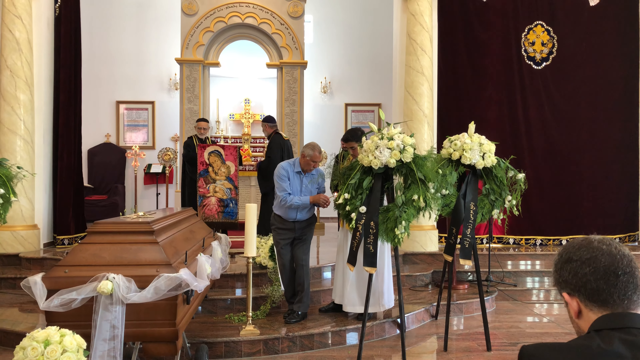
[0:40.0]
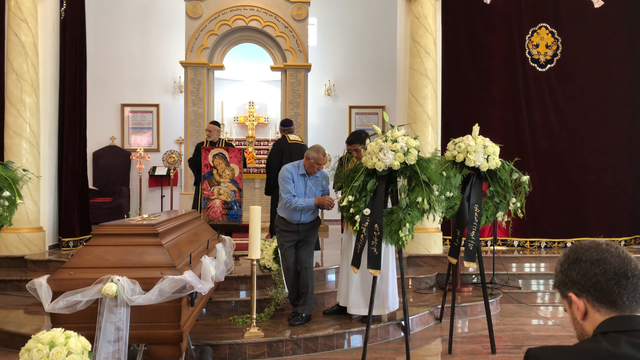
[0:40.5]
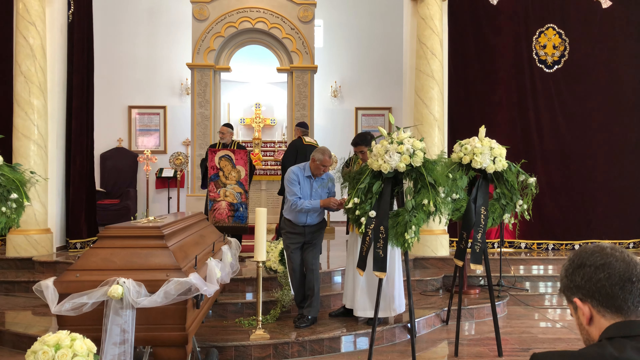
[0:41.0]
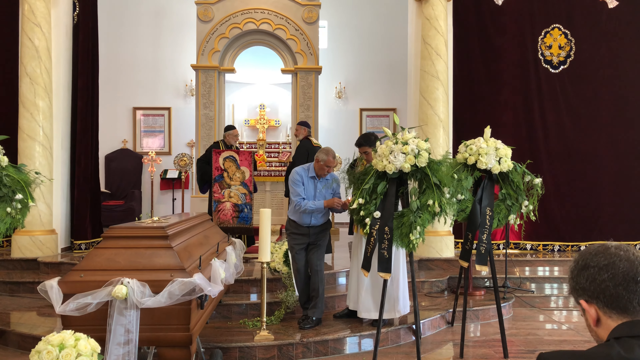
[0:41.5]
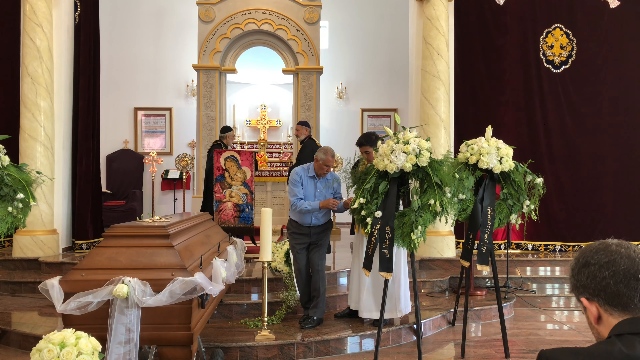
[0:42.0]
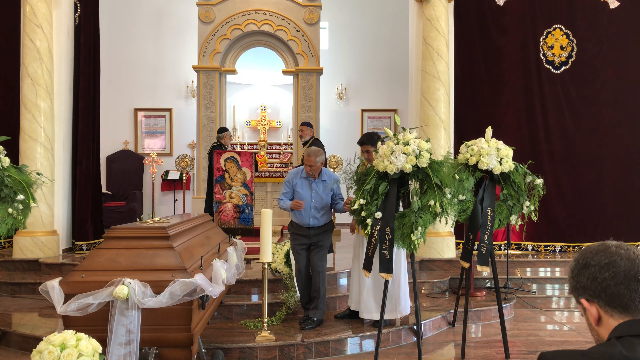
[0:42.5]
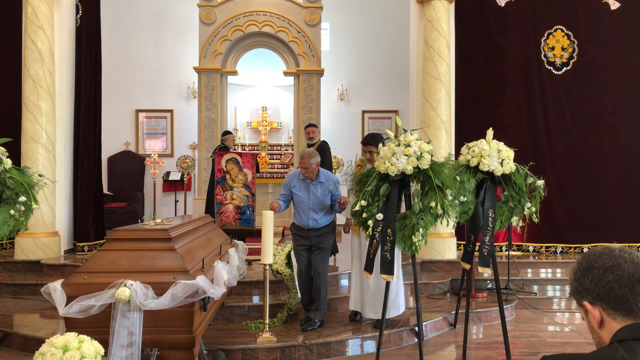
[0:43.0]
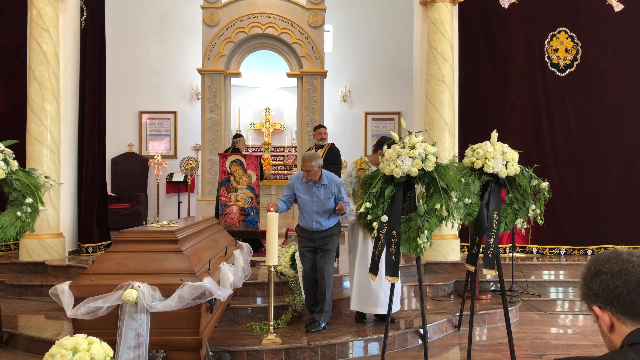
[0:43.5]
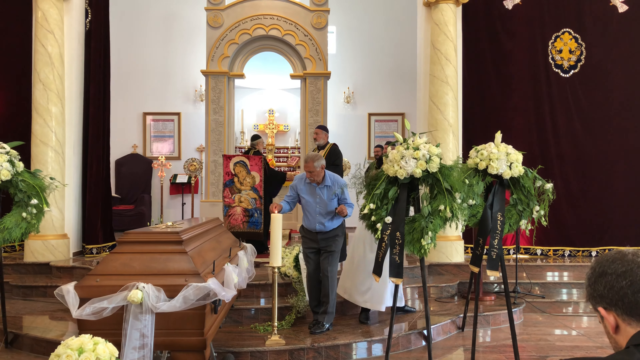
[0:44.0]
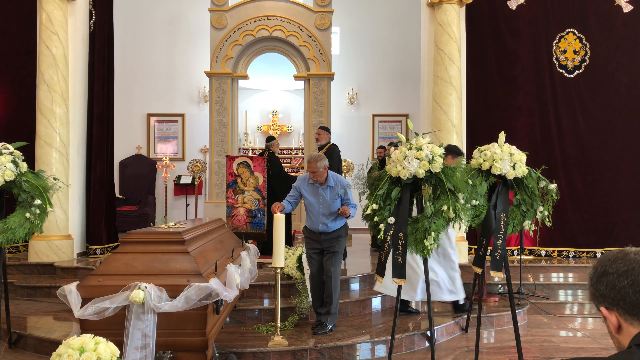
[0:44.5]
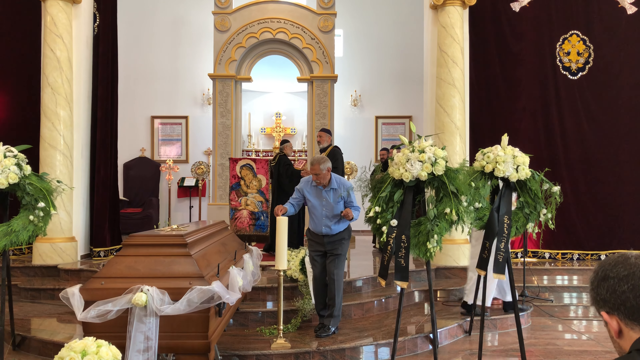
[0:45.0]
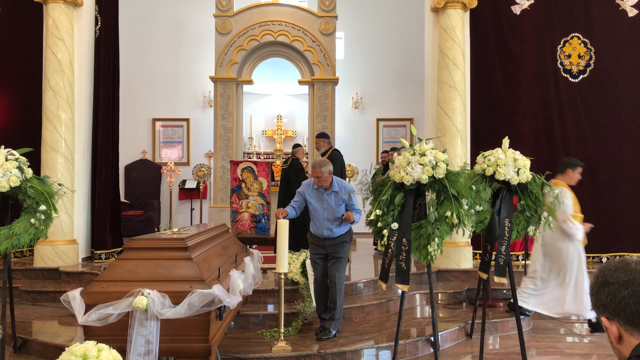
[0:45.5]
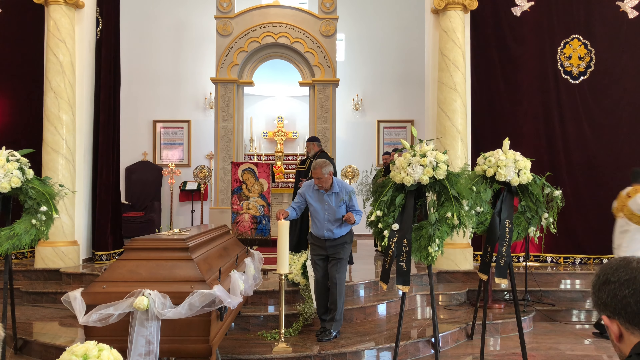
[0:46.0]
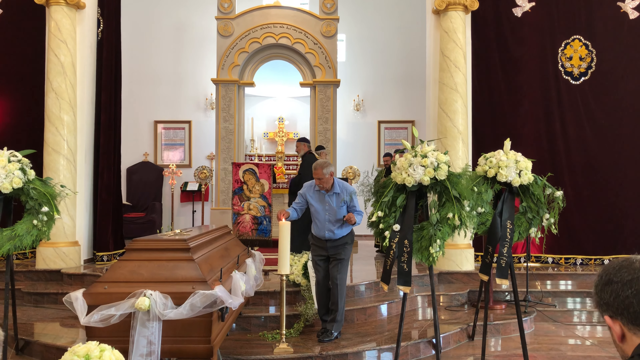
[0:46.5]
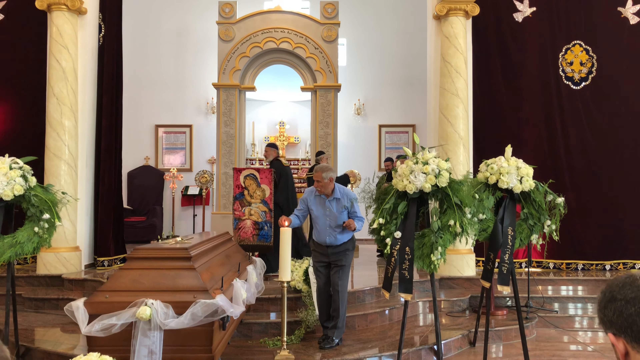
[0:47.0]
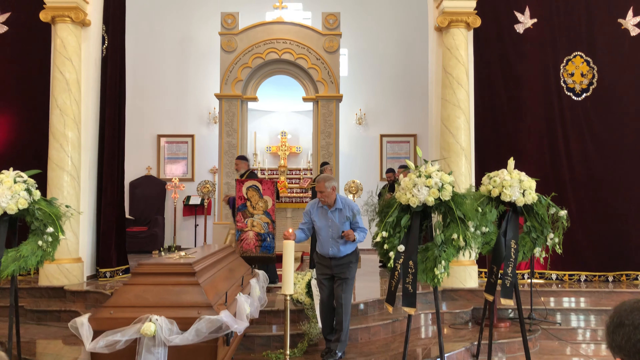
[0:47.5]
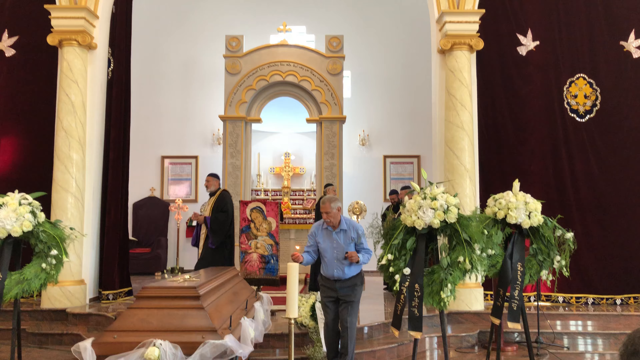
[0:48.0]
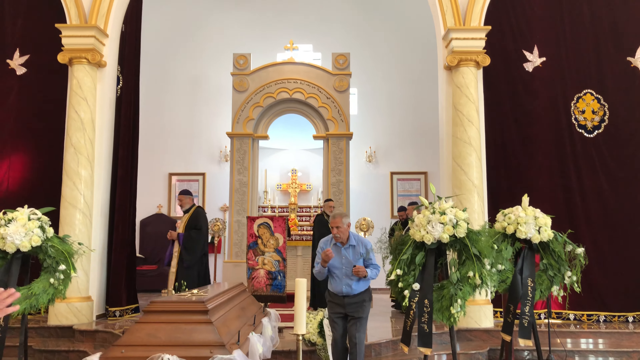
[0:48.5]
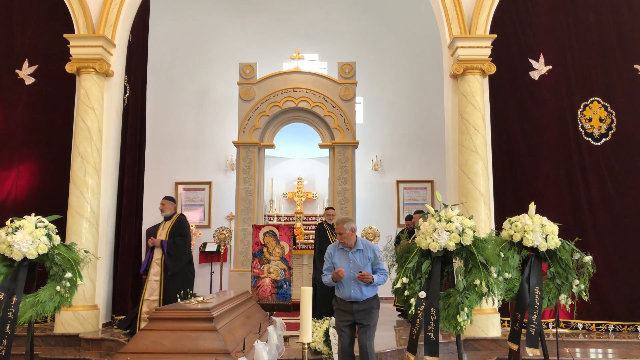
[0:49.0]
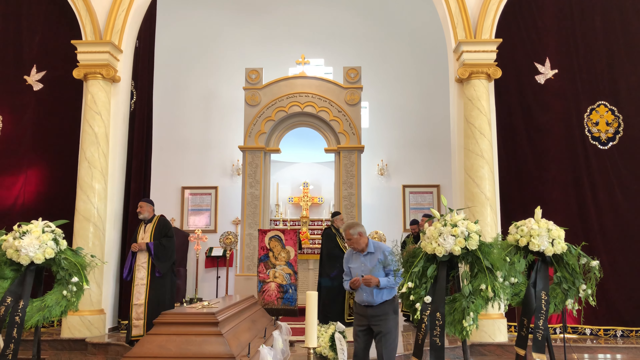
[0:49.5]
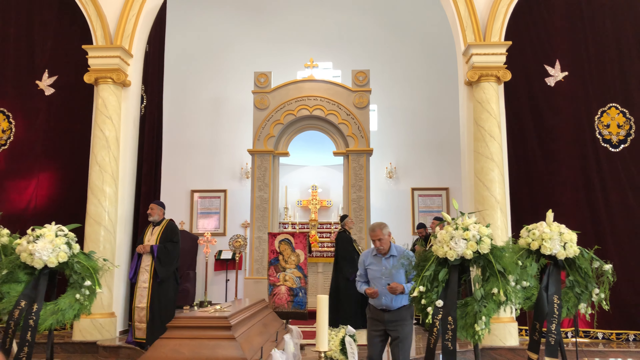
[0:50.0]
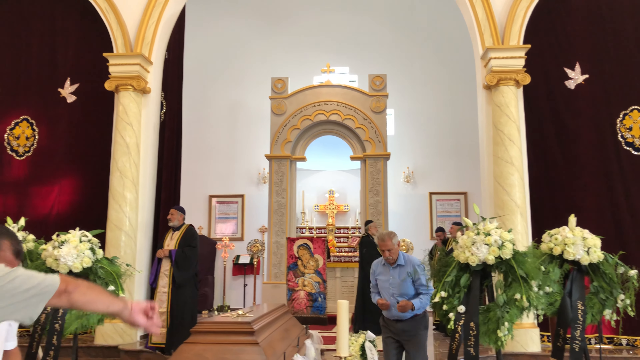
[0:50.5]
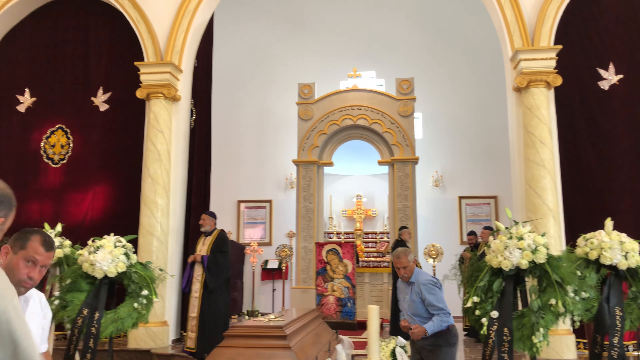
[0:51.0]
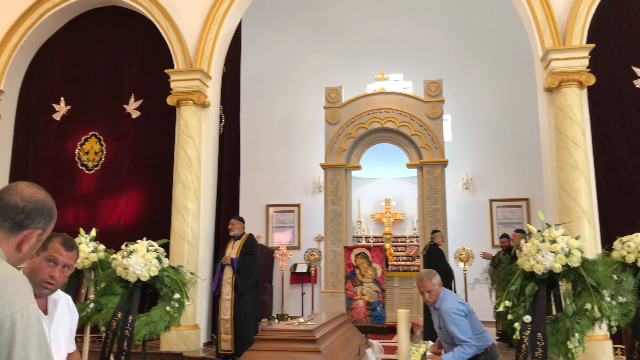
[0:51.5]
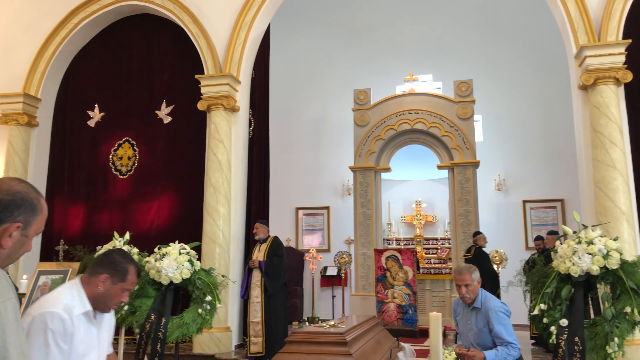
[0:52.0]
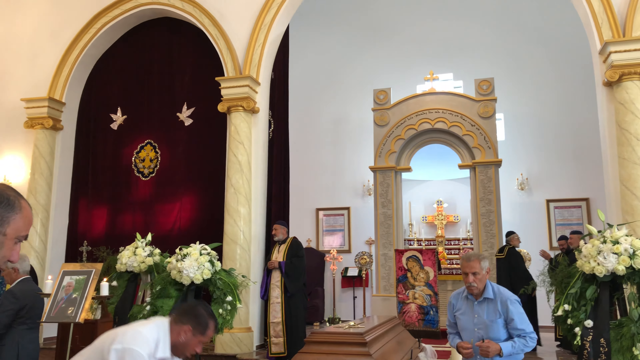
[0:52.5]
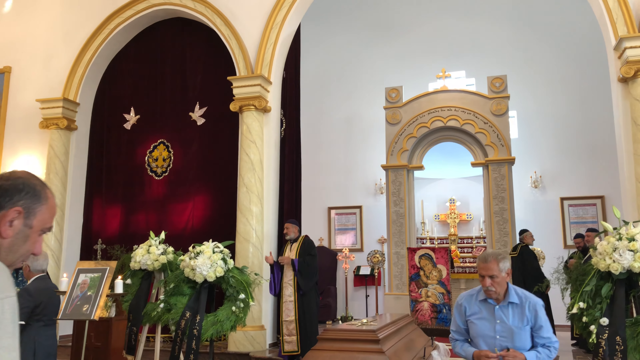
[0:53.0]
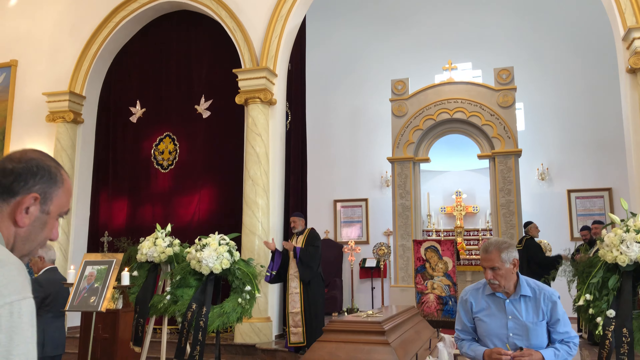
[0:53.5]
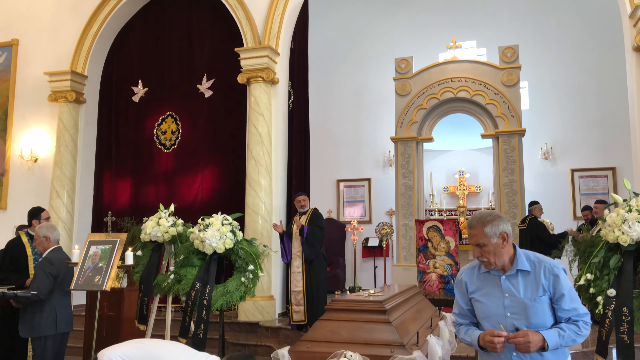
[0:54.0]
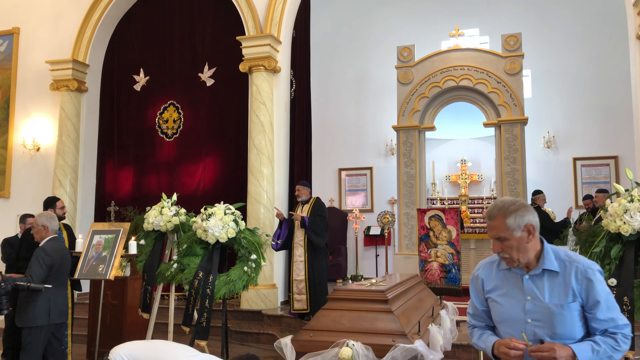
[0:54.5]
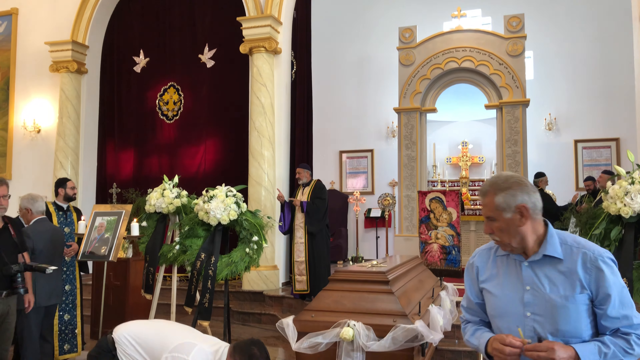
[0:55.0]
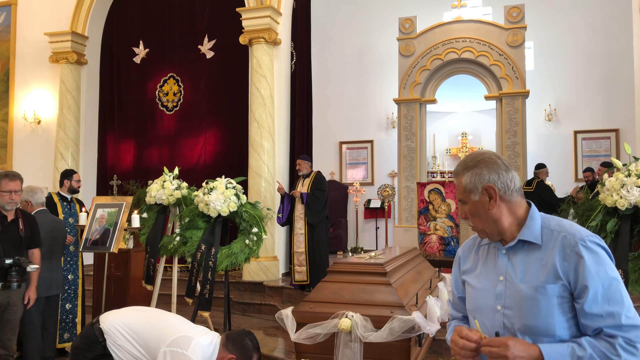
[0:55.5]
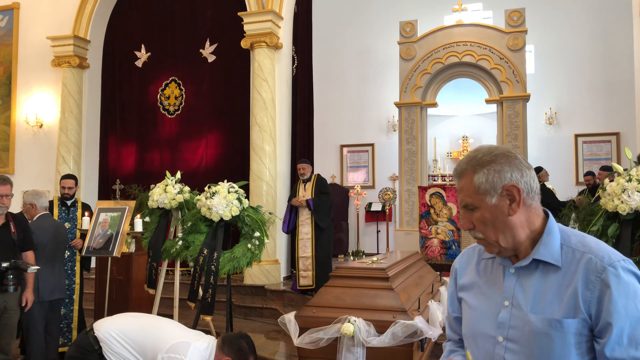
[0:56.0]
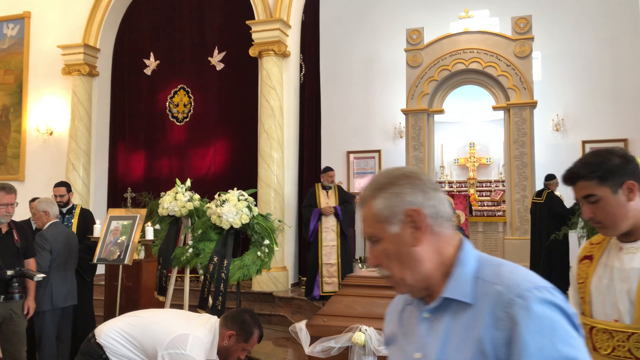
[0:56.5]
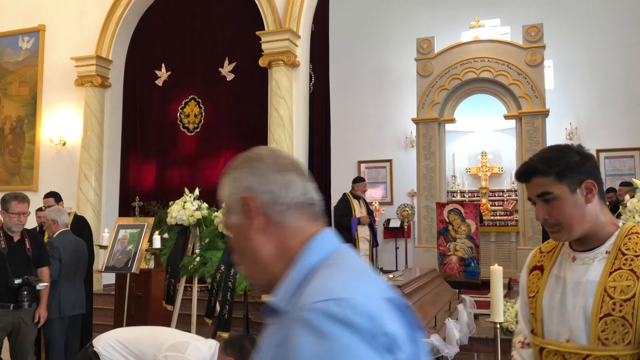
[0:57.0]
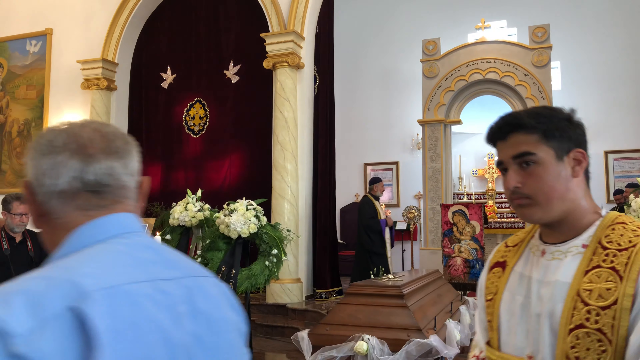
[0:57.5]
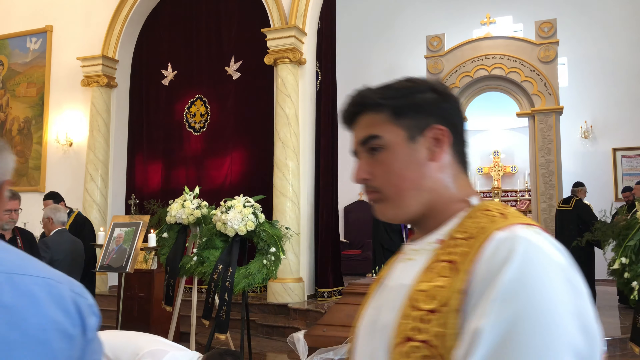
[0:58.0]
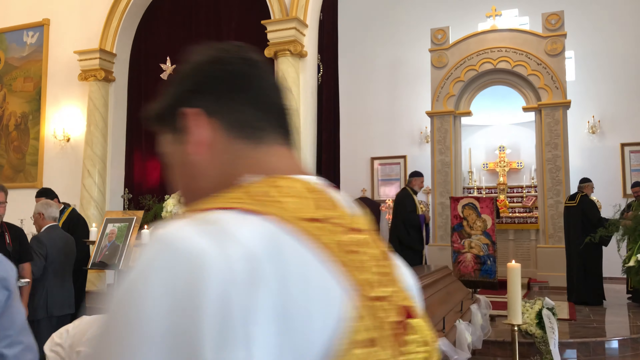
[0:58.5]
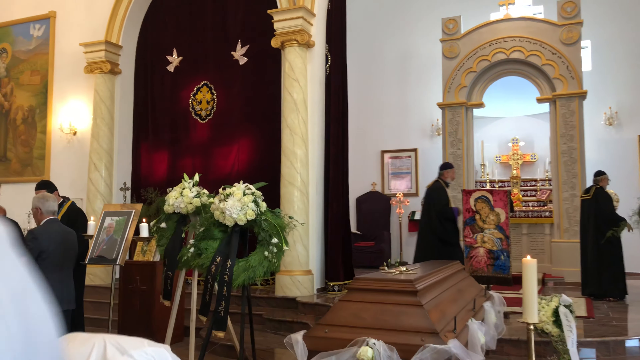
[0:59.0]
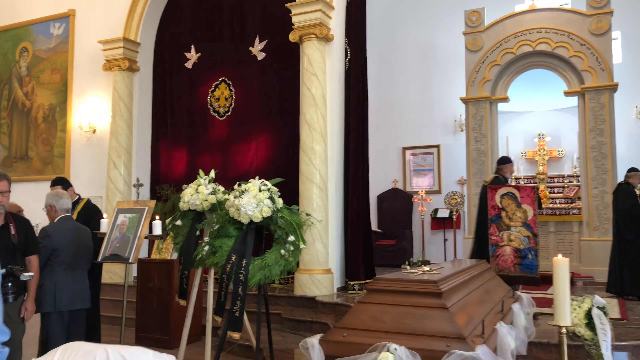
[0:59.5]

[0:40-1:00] The camera faces the front of the room and the casket. A man in a blue shirt and gray pants is lighting candles near the casket, and there are three wreaths with white flowers and black ribbons. Clergymen stand behind the casket, a little further away, having a conversation together, and everyone appears to be busy getting ready for the funeral. The camera pans to the left, showing the person holding the video camera speaking with another man; in the background is a photo, presumably of the deceased, near the wreaths with white flowers and black ribbons. Another cameraman, with a regular camera rather than a video camera and also dressed more casually, stands at the front, and there are various candles around. The building is very fancy and ornate, with a lot of fine detail on the arches around the front of the church.